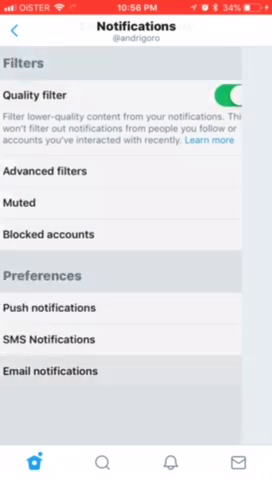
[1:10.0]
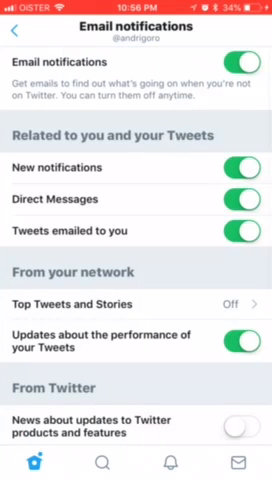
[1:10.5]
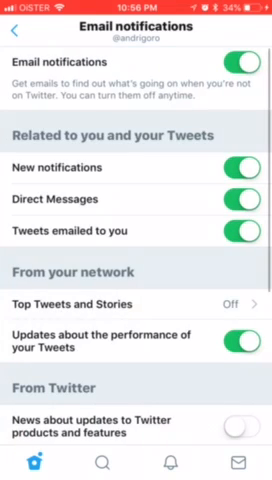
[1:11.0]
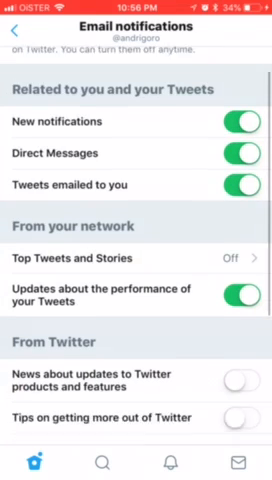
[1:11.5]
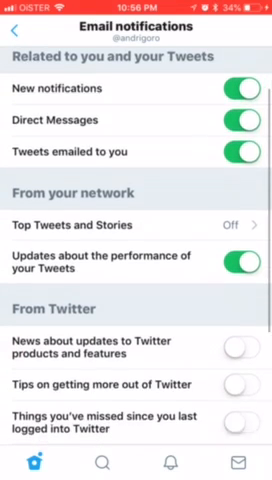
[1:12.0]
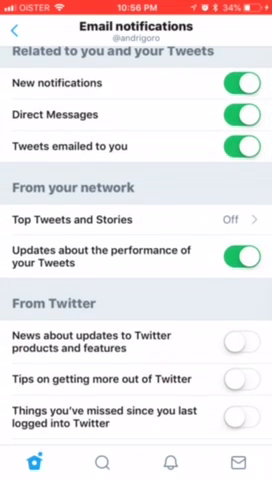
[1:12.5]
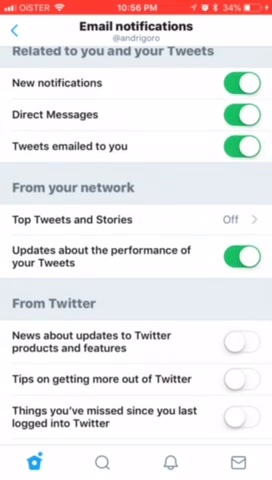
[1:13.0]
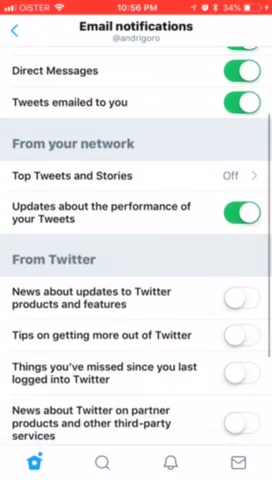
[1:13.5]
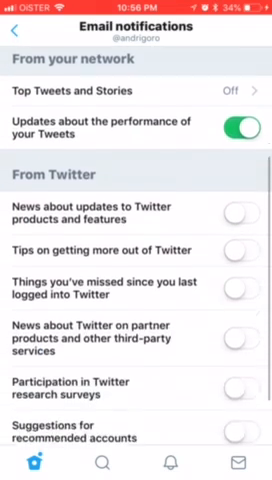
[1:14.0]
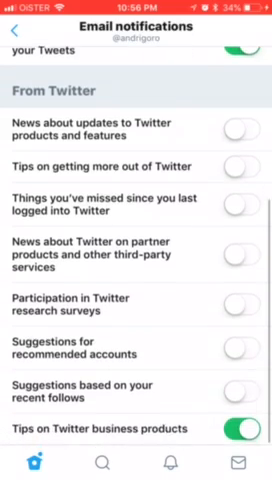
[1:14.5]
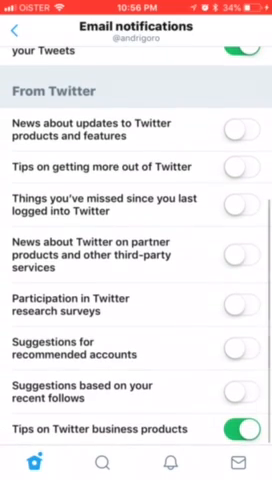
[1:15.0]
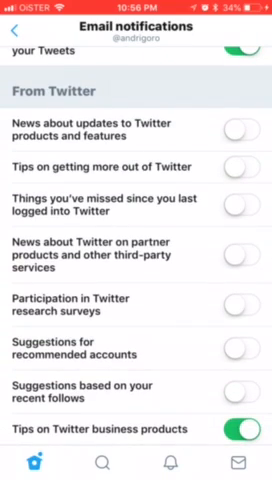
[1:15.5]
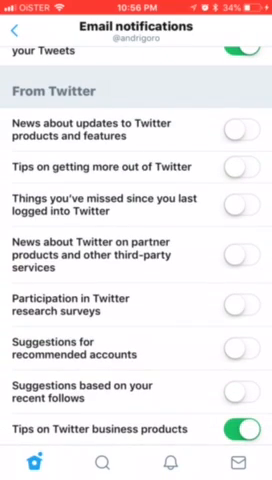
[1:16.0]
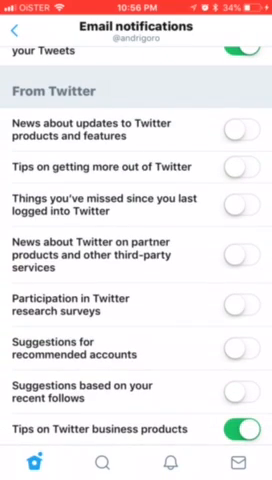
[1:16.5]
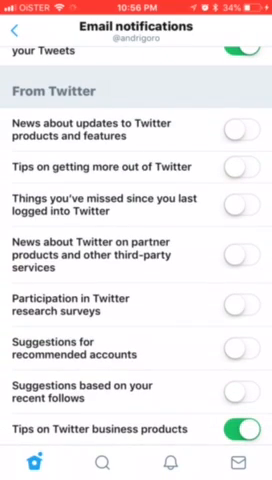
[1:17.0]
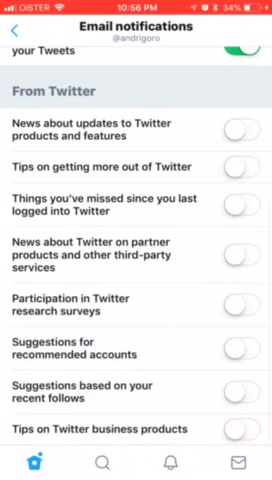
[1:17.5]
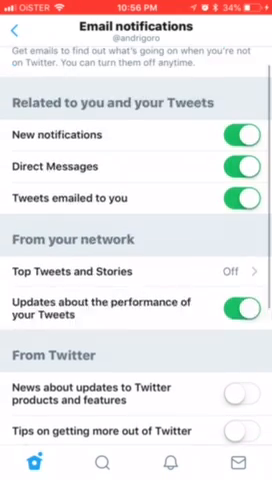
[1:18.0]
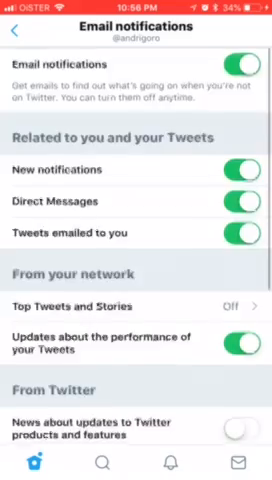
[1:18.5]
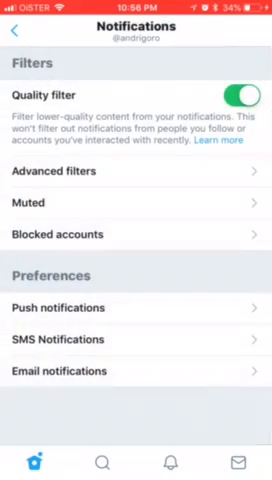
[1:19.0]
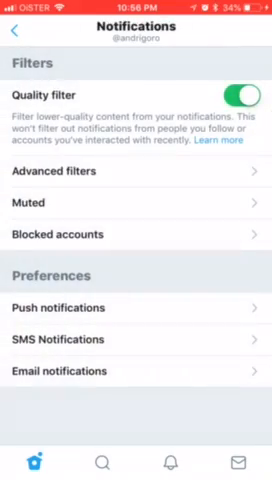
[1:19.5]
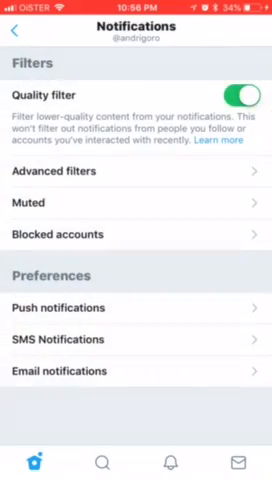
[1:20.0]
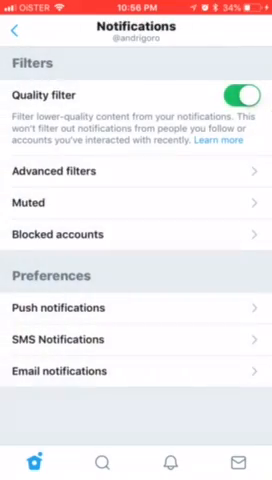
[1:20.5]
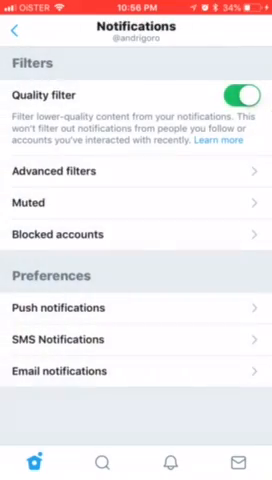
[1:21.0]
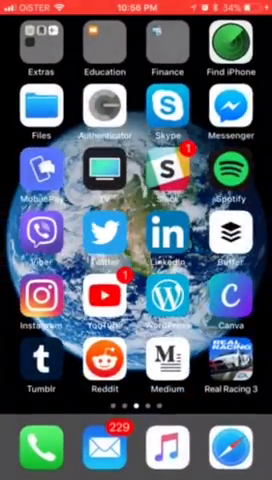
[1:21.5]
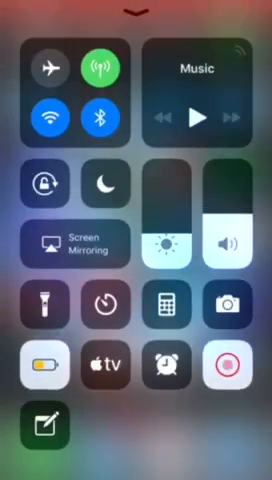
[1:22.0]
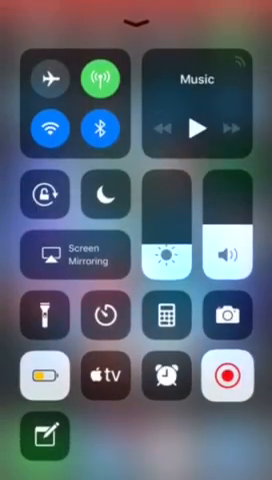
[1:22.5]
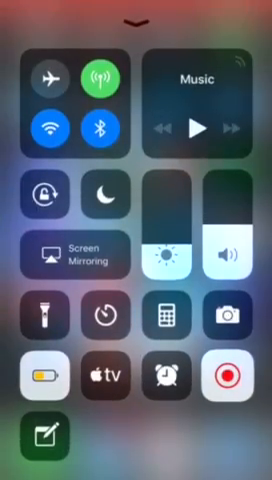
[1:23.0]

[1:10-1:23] A Twitter page lists email notification options: tips on Twitter business products, suggestions based on recent follows, suggestions for recommended accounts, participation in Twitter research, news about Twitter on partner products and other third-party services, things missed since last logging in to Twitter, tips on getting more out of Twitter, and news about updated Twitter products and features. At the top it reads "from Twitter" and "email notifications for Andrew Goro." The time is four minutes to 11, the battery is at 34% and charging, and the phone is connected to a Bluetooth device and to Wi-Fi on the network called Oyster. The Twitter page is on home, then the person goes to push notifications and moves toward advanced filters, with options for muted, blocked contacts, push notifications, SMS notifications and email notifications.